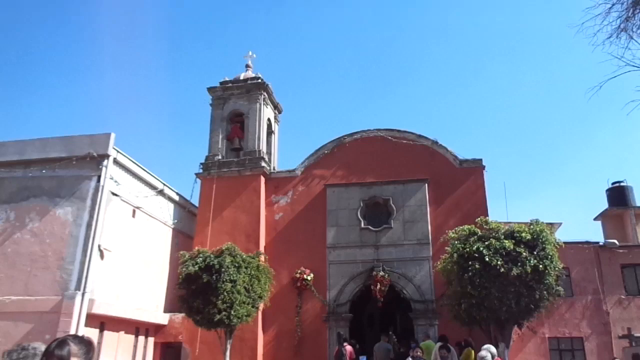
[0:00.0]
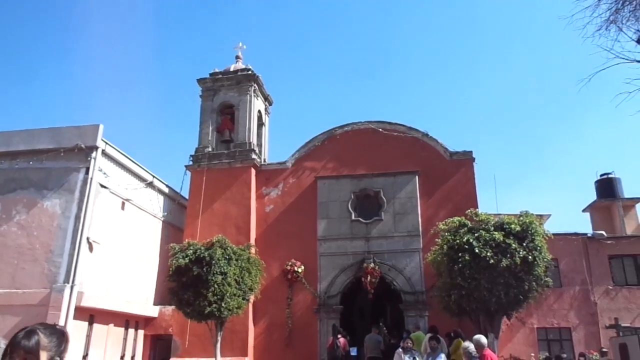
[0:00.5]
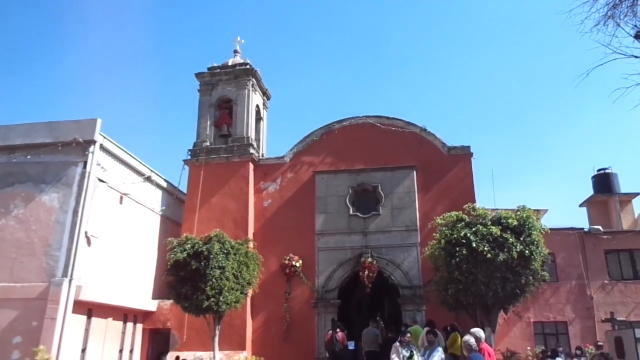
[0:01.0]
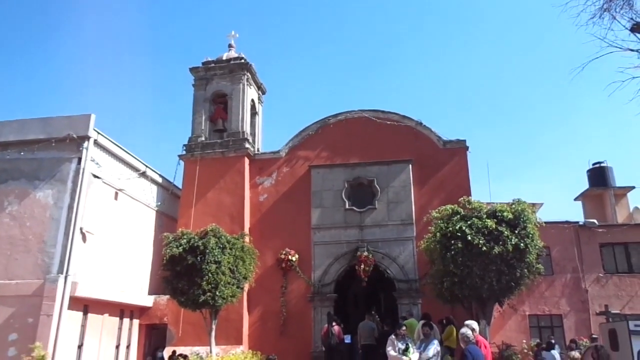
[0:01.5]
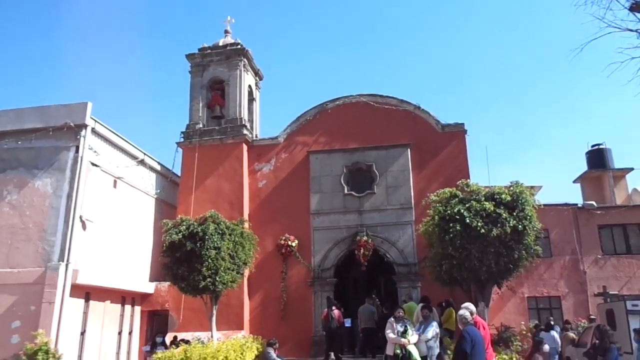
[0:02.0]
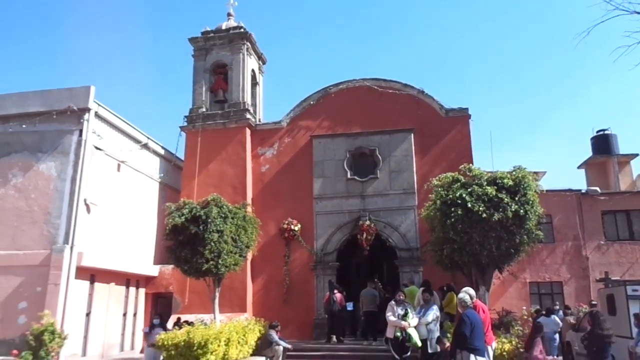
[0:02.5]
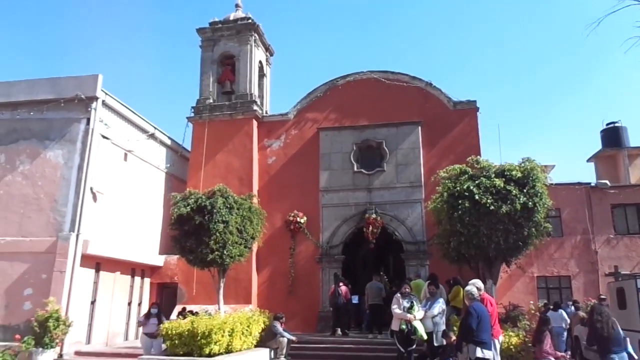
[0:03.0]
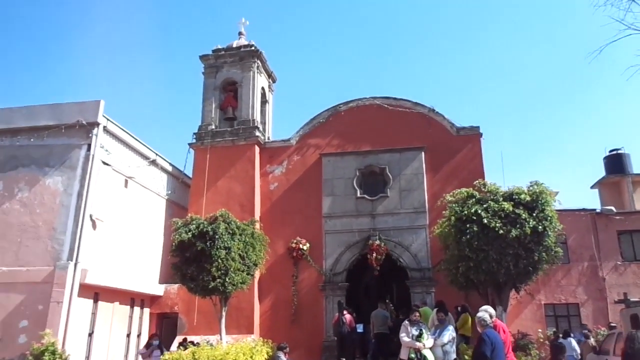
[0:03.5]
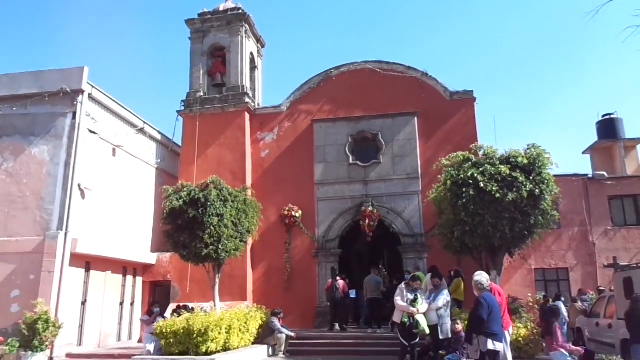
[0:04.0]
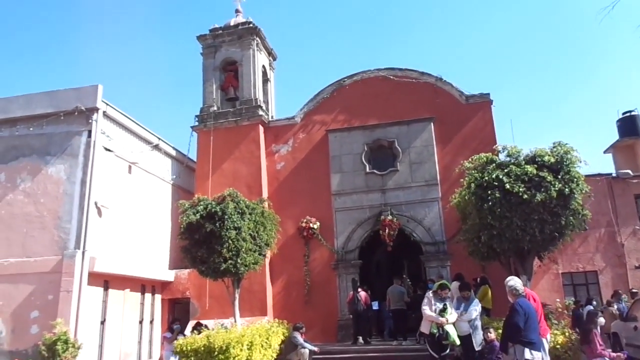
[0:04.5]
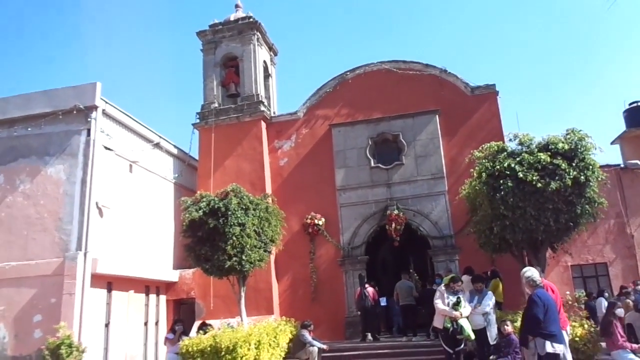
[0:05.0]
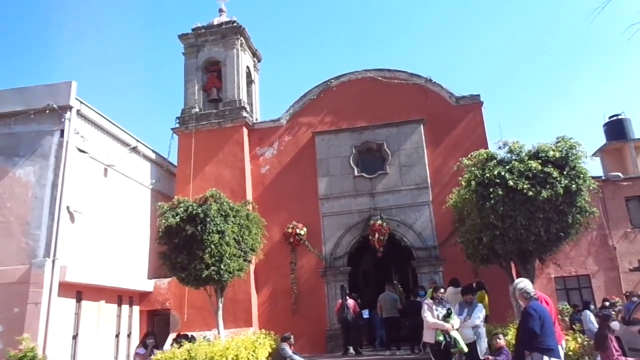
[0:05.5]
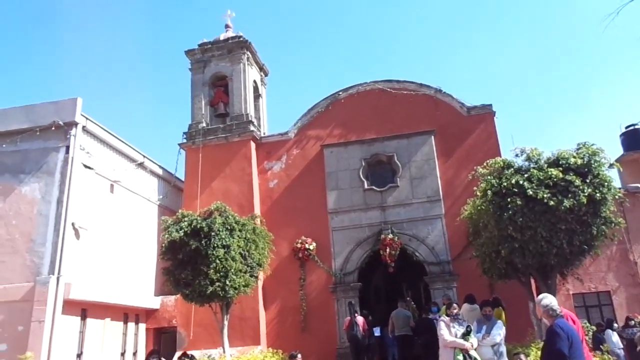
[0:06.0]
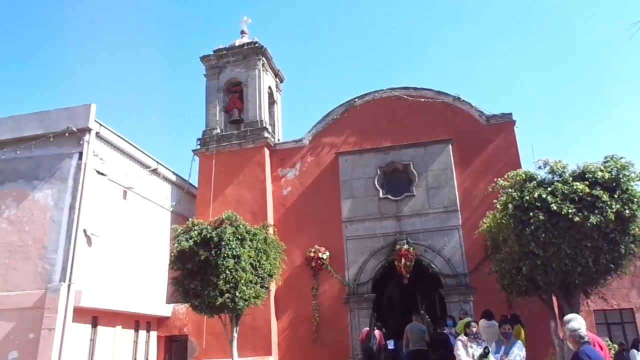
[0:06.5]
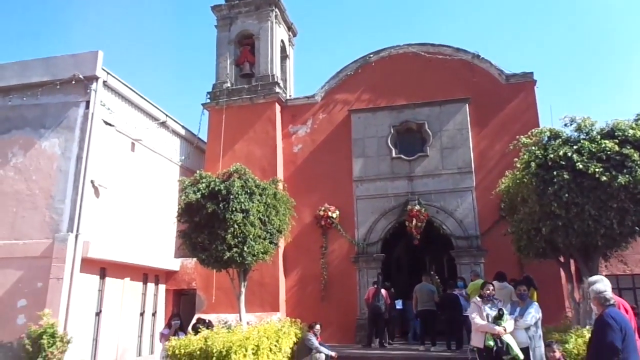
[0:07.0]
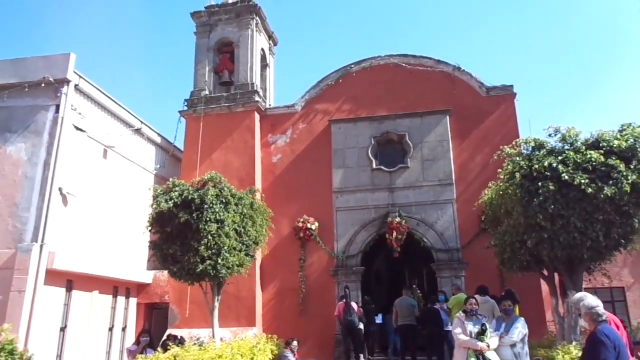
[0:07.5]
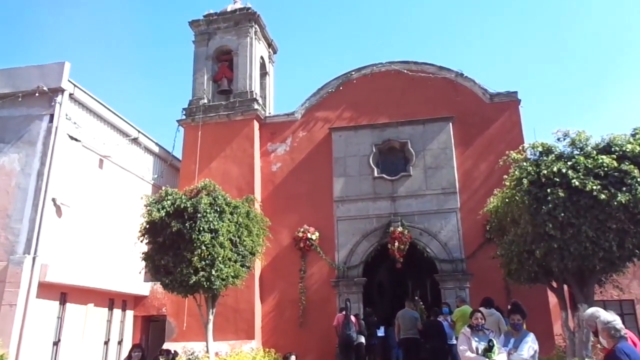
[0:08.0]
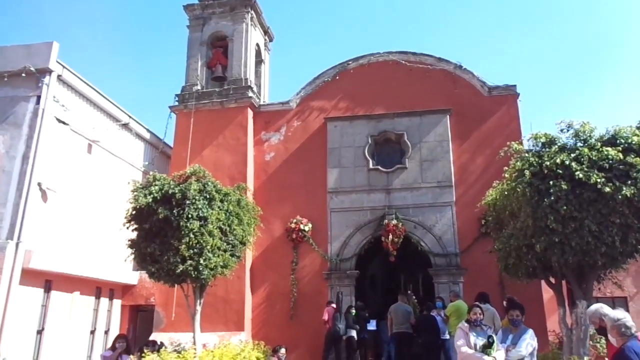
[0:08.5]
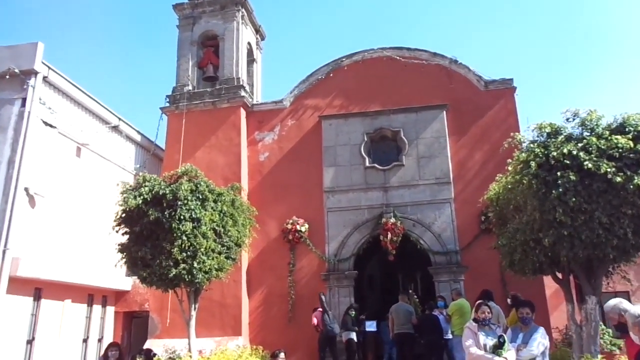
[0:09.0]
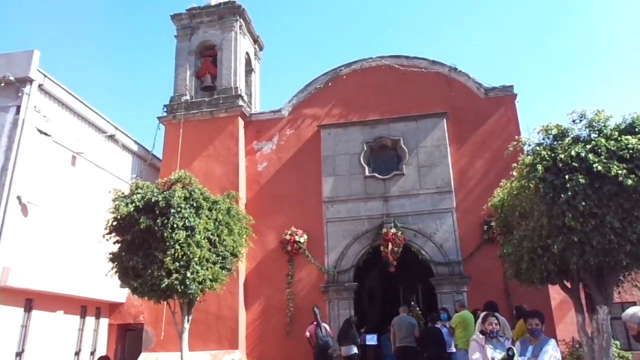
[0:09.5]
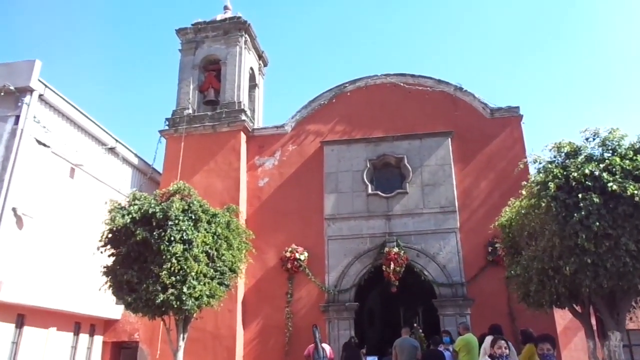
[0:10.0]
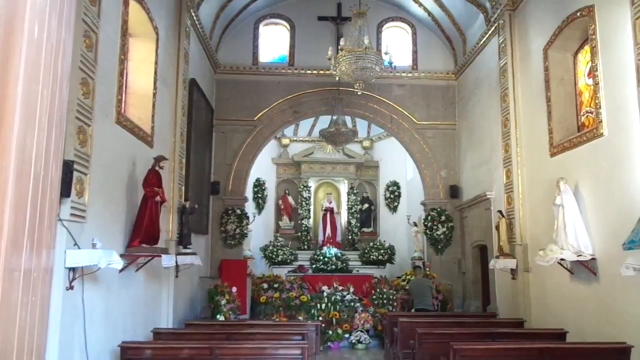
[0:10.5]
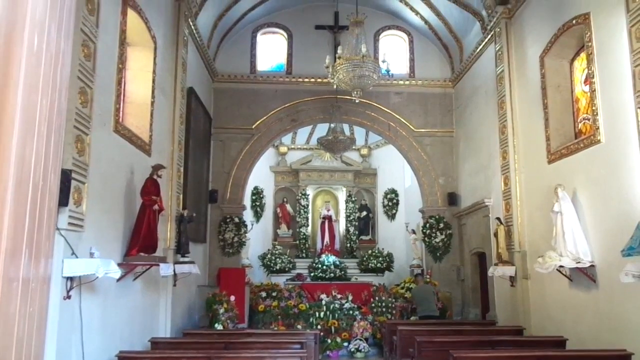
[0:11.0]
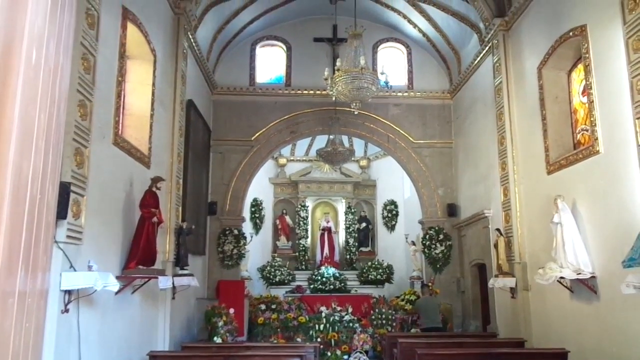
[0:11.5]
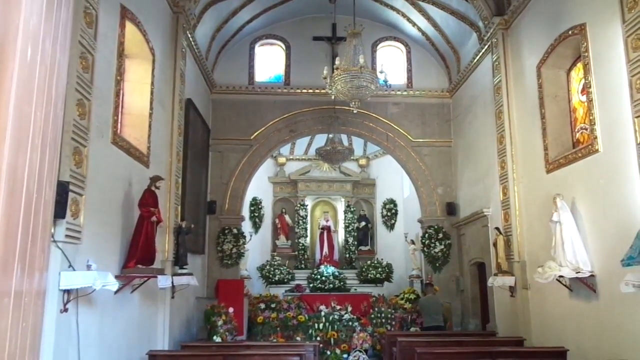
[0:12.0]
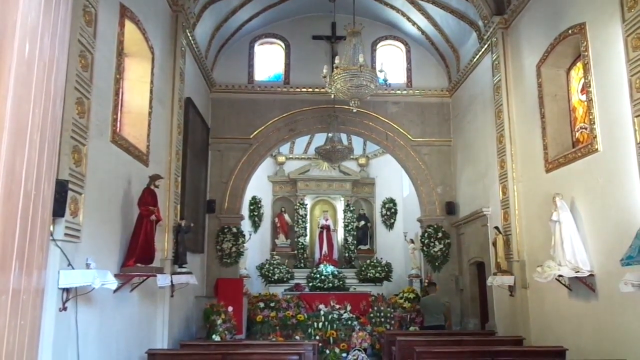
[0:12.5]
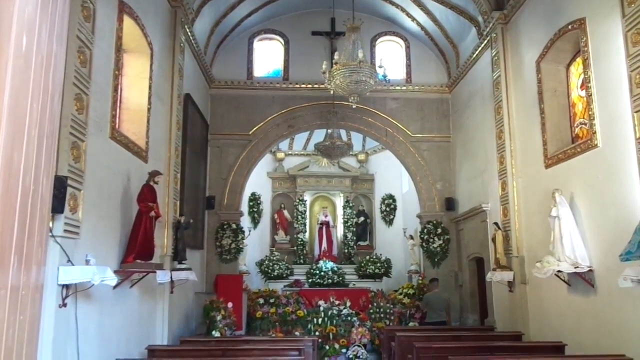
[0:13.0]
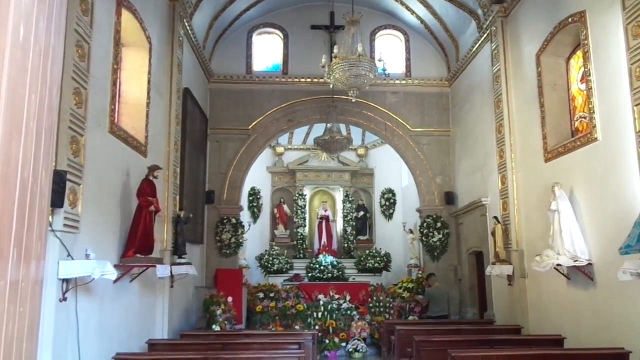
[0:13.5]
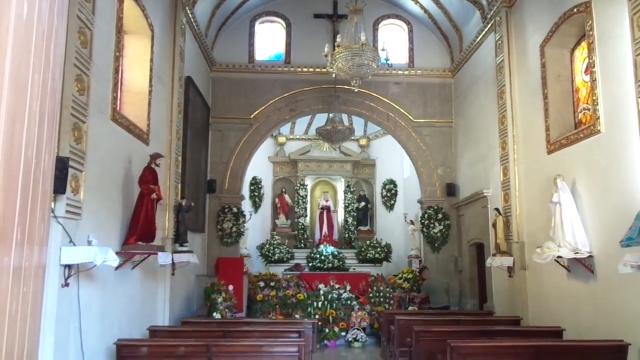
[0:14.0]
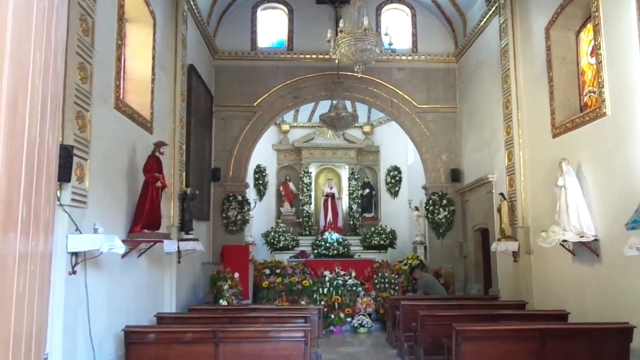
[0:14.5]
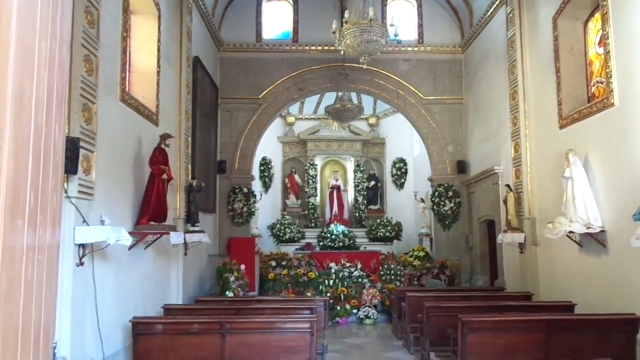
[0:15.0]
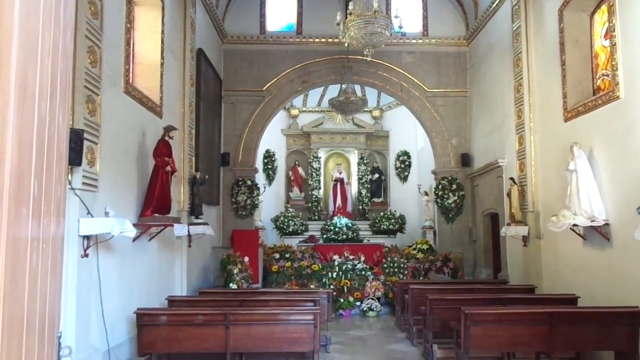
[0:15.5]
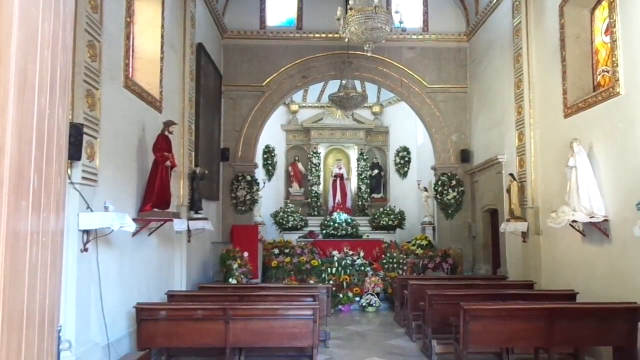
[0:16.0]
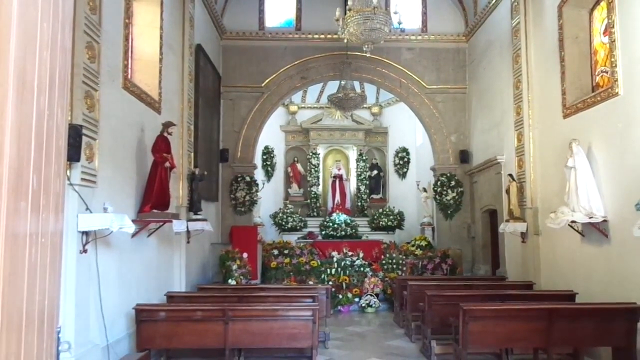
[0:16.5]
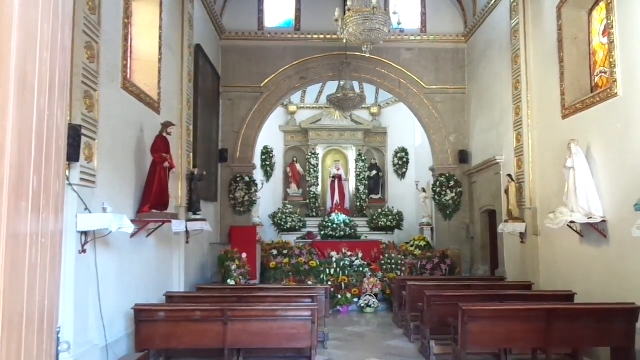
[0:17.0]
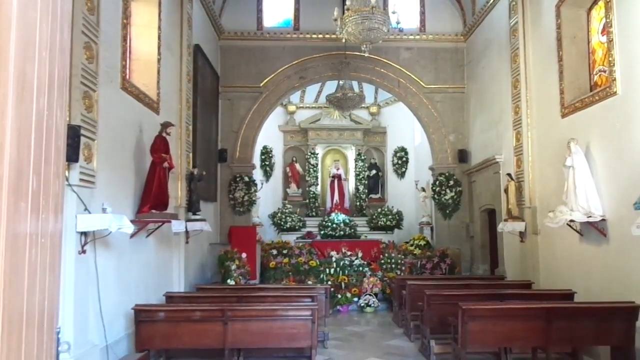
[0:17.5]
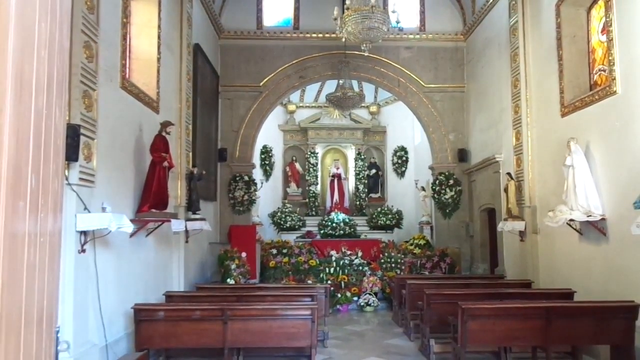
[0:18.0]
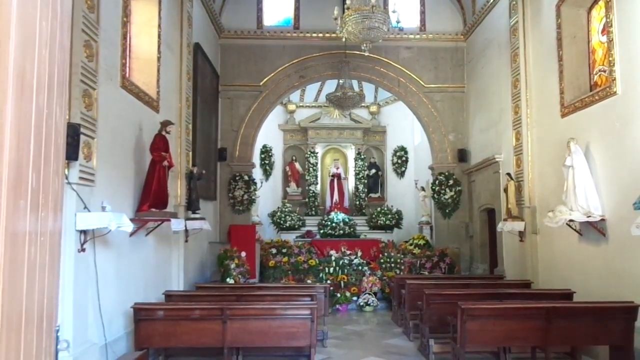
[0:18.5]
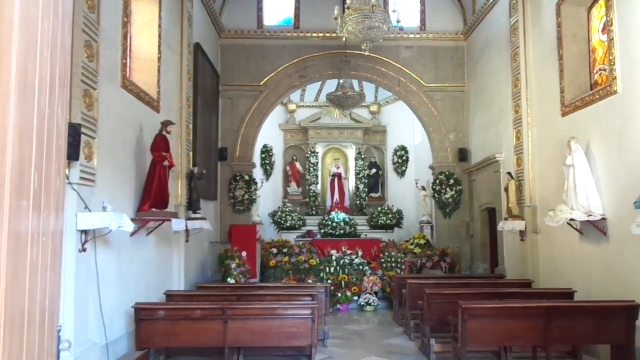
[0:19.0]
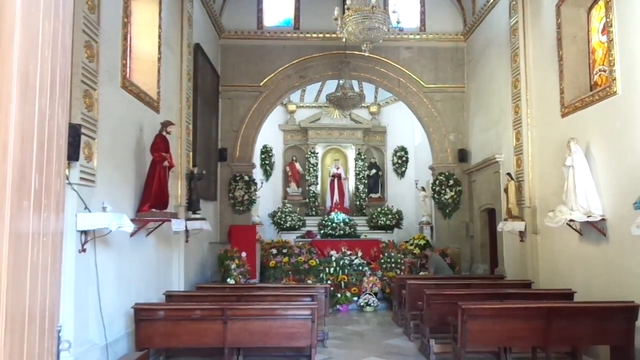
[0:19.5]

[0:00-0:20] Filmed outside, the video looks at a building, with three buildings visible. The one on the left is a kind of grey, square concrete building. The building in the middle is a little more ornate and a kind of terracotta red, with what looks like a bell tower on its left-hand side. It has a flat roof apart from the front part, which arches up slightly in a semicircle. There is a large arched doorway, and people are going in and out of the building. The camera zooms slightly towards the building before the scene changes to the inside. It is a small church hall with wooden pews and lots of floral pieces on the altar, walls and floor. Small statues of Jesus are on small shelves on either side of the church, and a big white archway separates the altar from the pews.